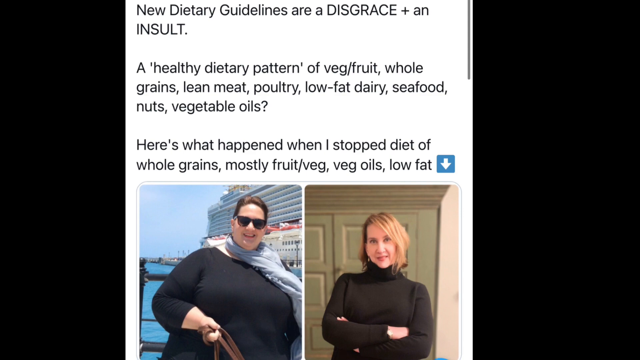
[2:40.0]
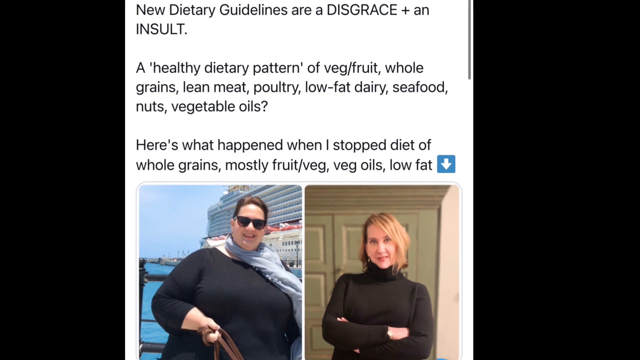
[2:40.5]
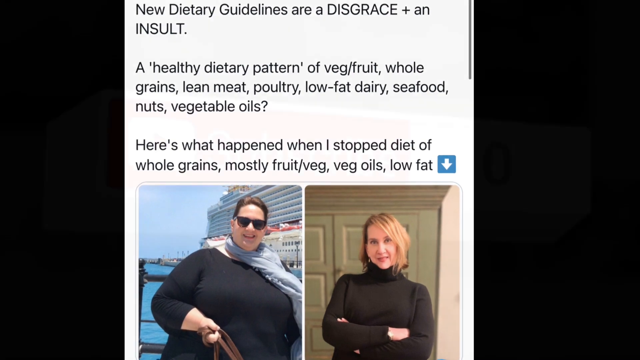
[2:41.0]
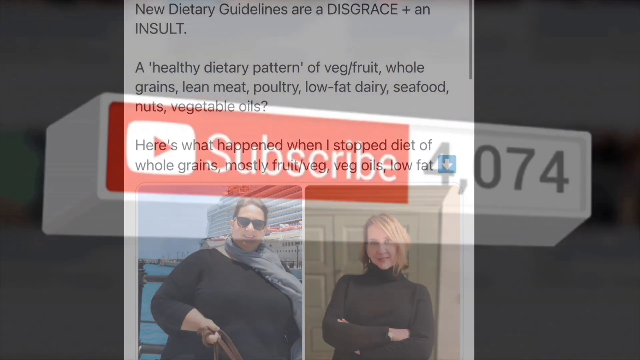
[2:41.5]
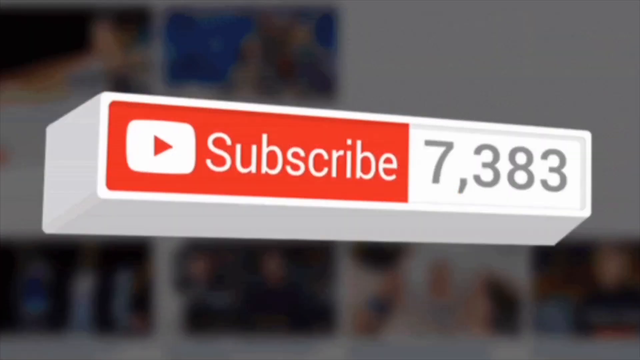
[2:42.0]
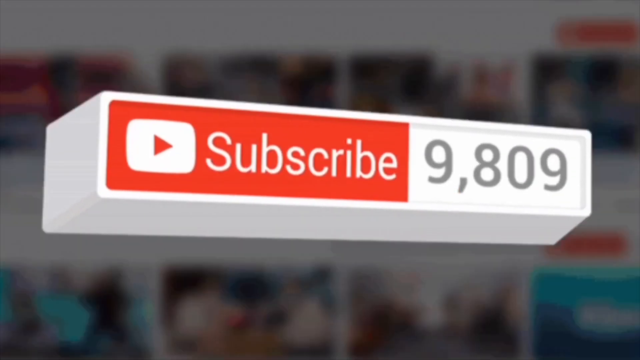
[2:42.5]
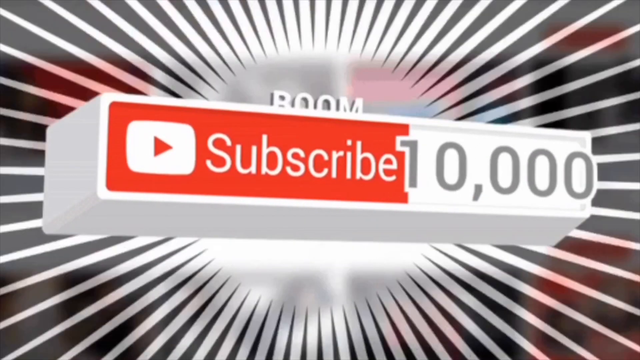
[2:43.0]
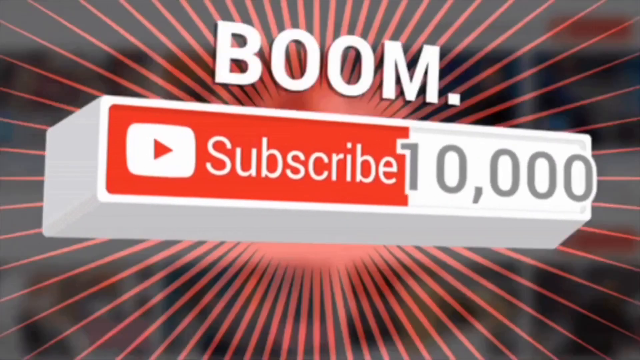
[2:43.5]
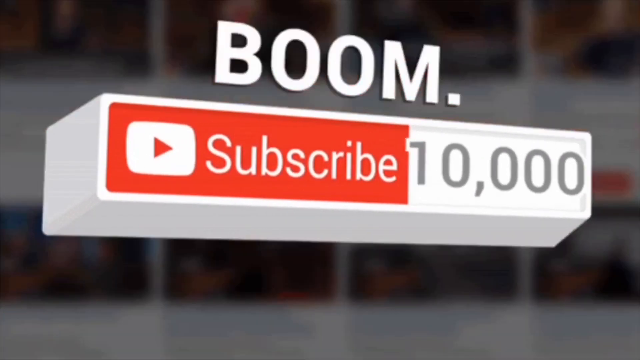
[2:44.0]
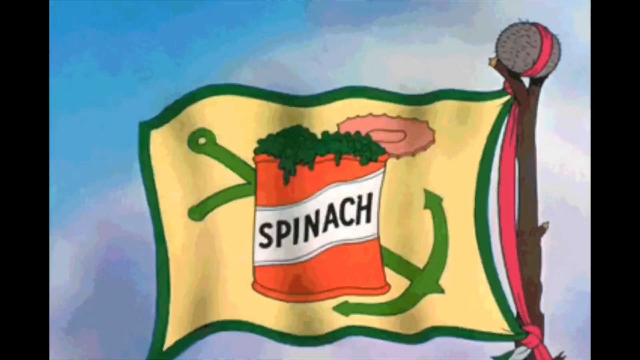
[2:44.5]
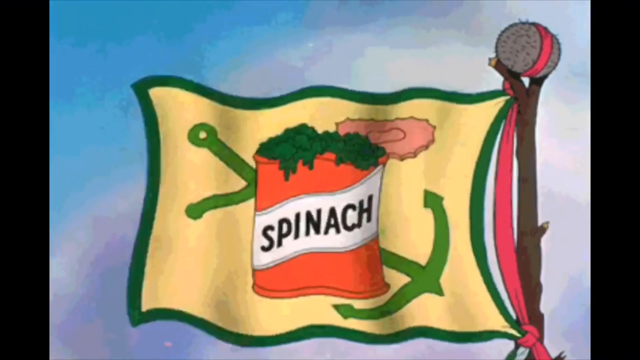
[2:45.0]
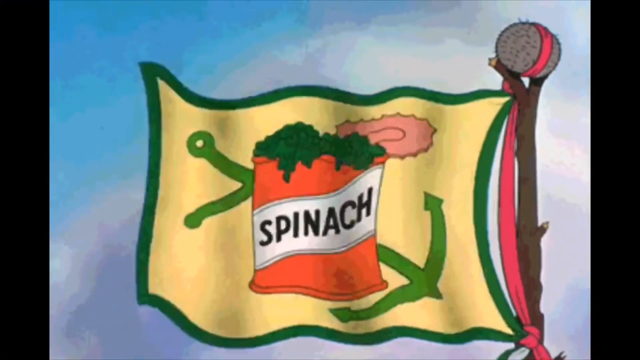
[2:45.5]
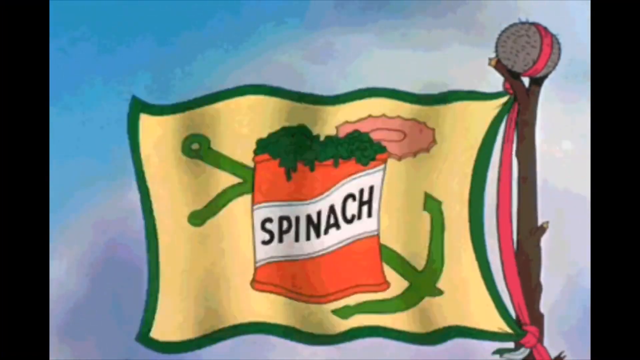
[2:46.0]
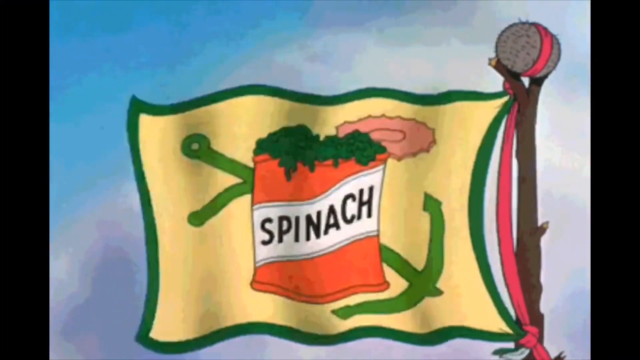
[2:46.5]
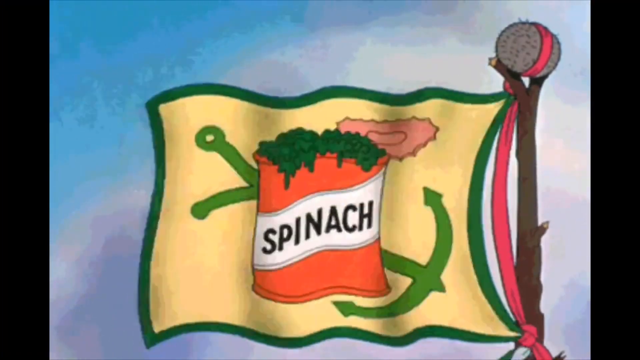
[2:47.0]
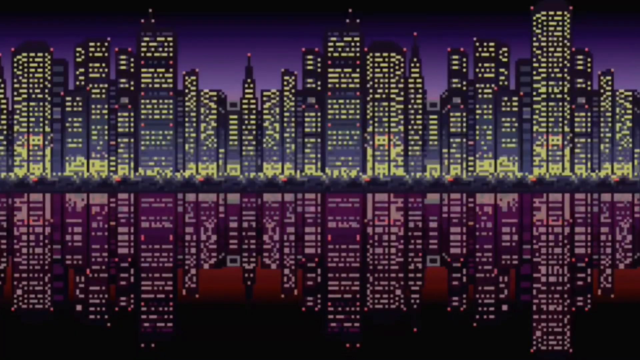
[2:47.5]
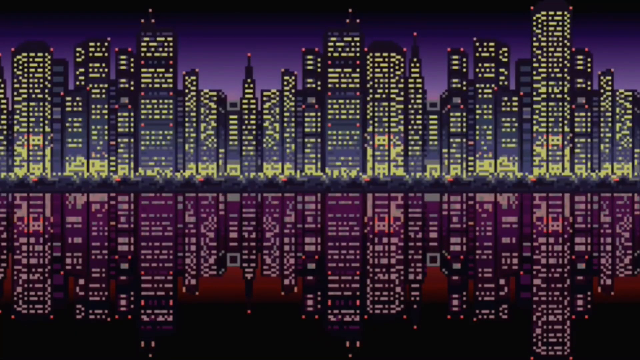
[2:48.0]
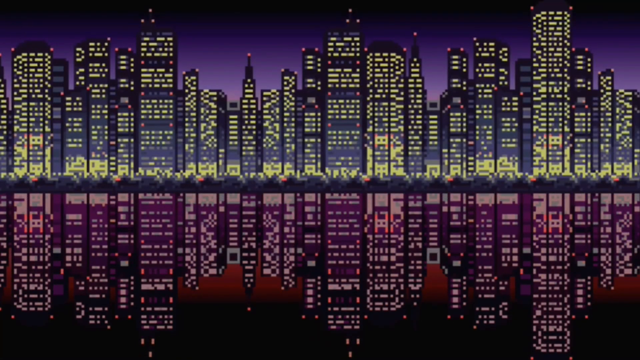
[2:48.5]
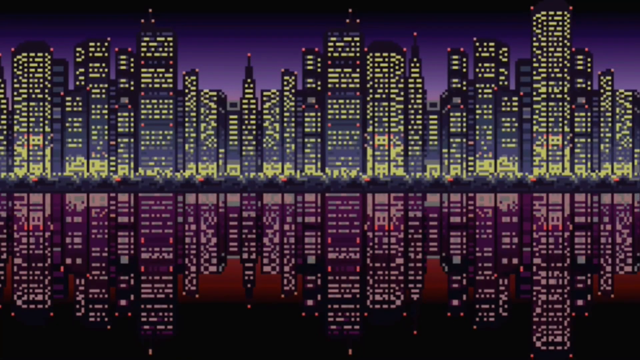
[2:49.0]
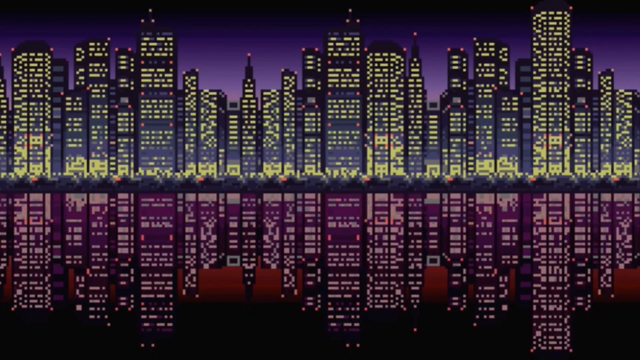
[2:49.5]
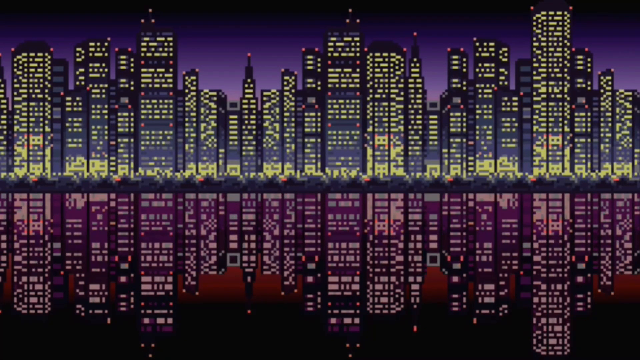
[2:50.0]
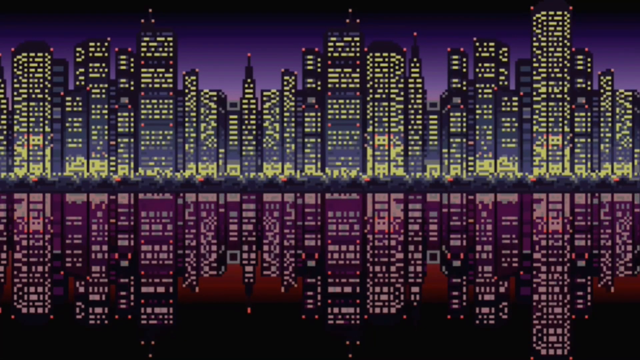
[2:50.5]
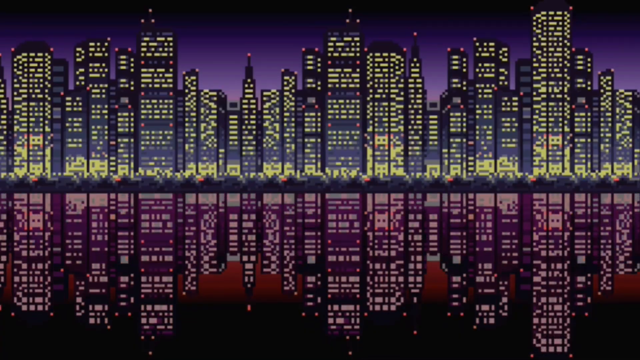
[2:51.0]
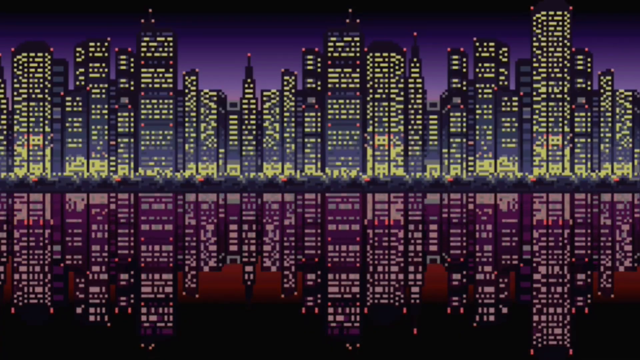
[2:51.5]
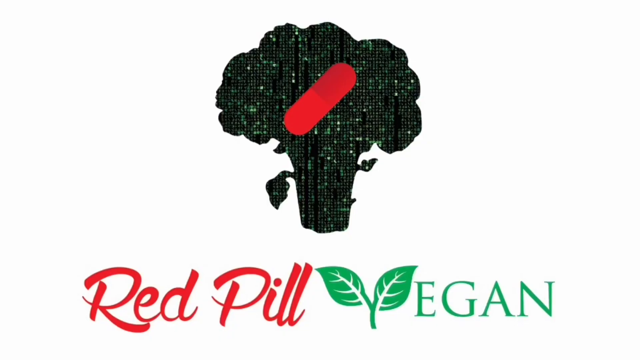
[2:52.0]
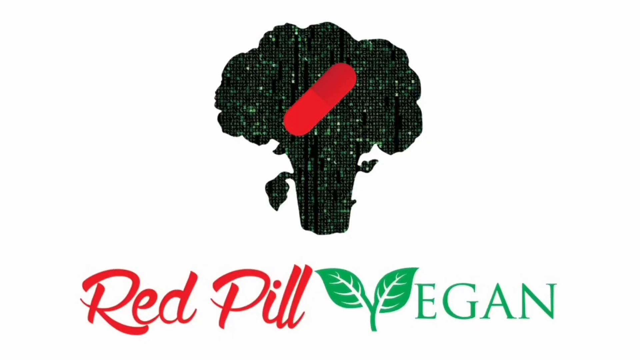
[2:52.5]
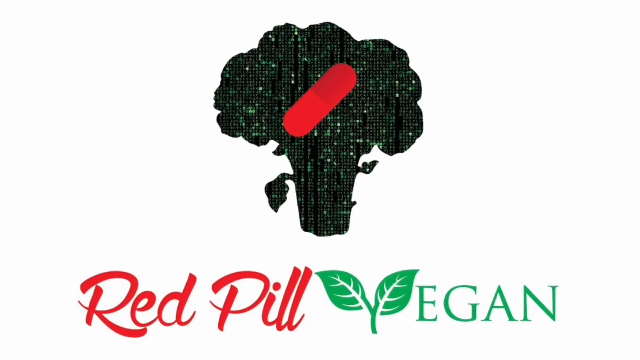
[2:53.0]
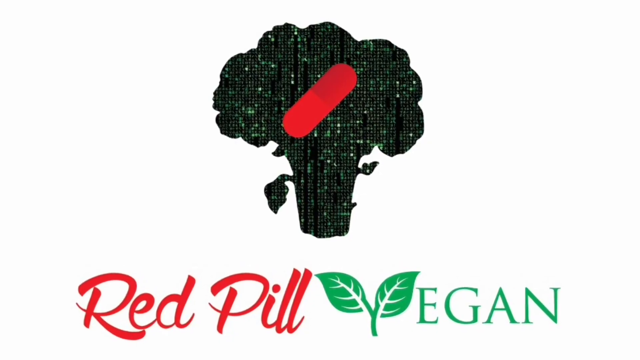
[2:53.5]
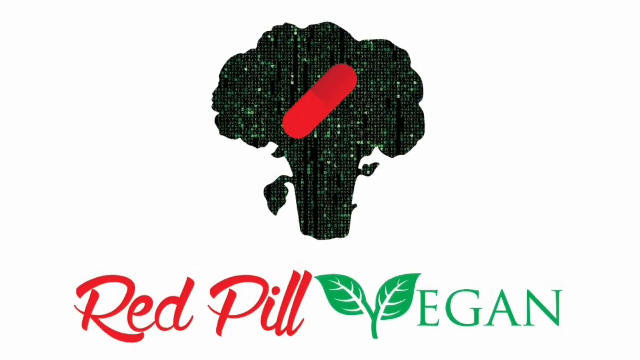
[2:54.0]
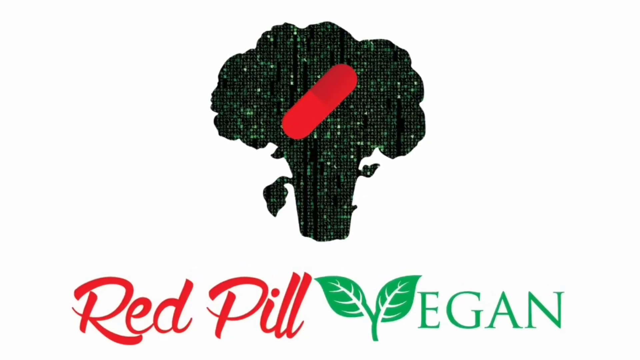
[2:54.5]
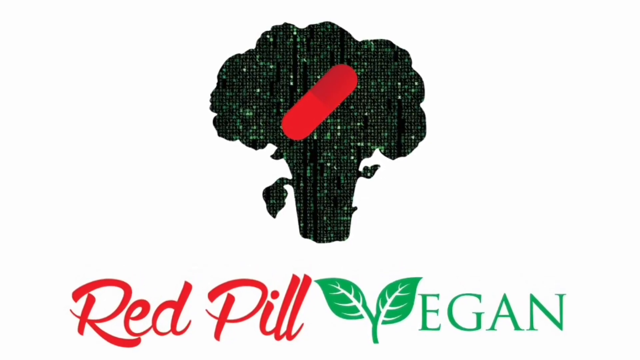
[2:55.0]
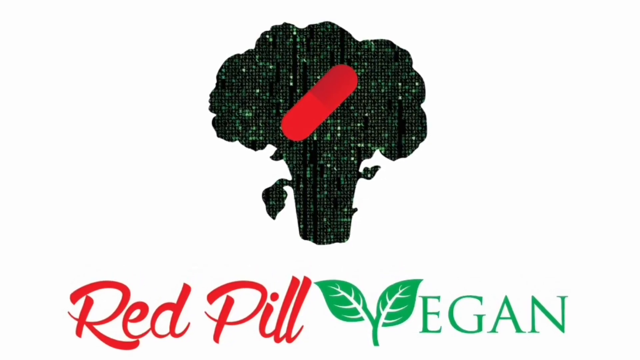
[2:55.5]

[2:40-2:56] A woman's opinion on the dietary guidelines for healthy eating is shown, and she does not seem to agree with them at all. A picture of her on the left shows her at a heavy, obese weight, and on the right she is slimmer with her arms crossed after not following the guidelines. Next, a subscribe button appears with the number increasing from 8,600 to over 10,000 subscribers, and then the word "BOOM" above it. A yellow flag waves in a breeze, showing an open can of spinach with a green anchor. Then a big city skyline appears at night, with all the tall buildings and their windows lit up, reflecting in a black pool of water. Finally, a black stalk of broccoli has a red pill on it, and underneath it are the words "red pill vegan."